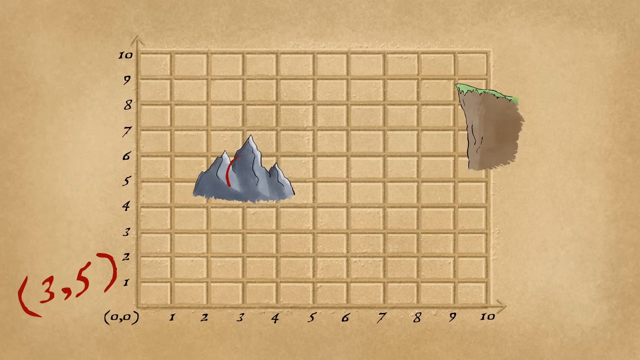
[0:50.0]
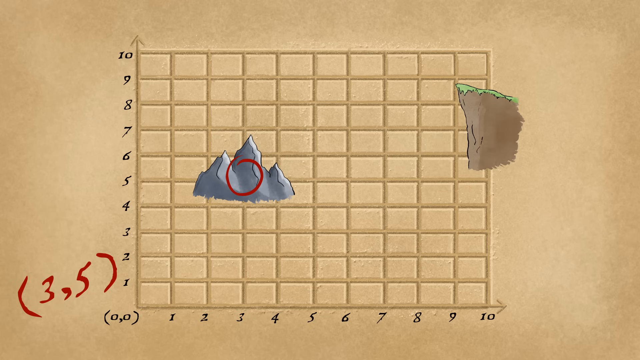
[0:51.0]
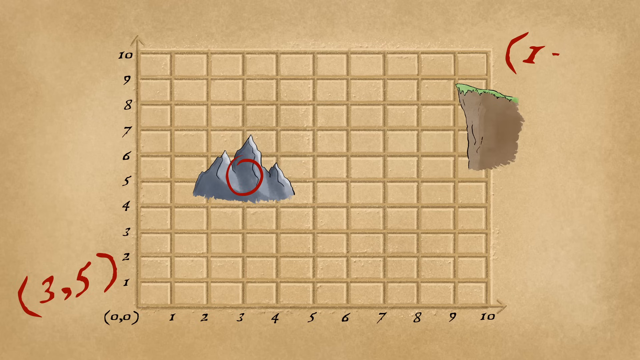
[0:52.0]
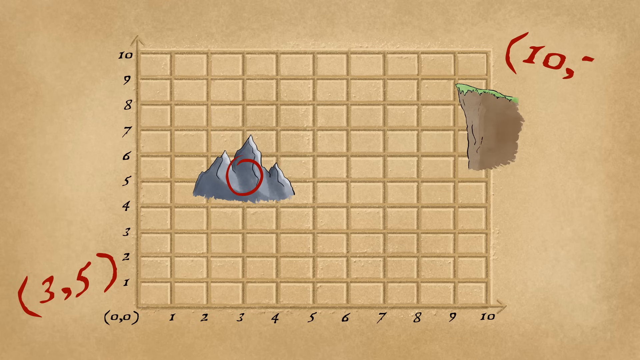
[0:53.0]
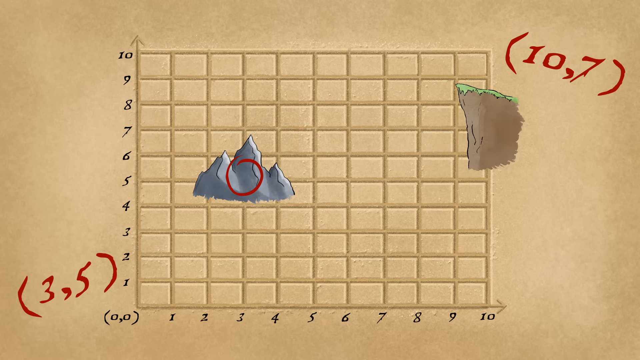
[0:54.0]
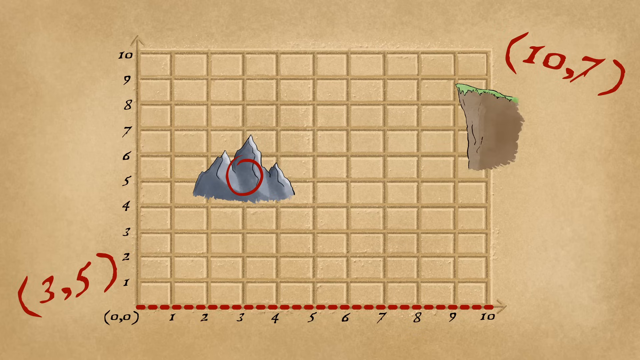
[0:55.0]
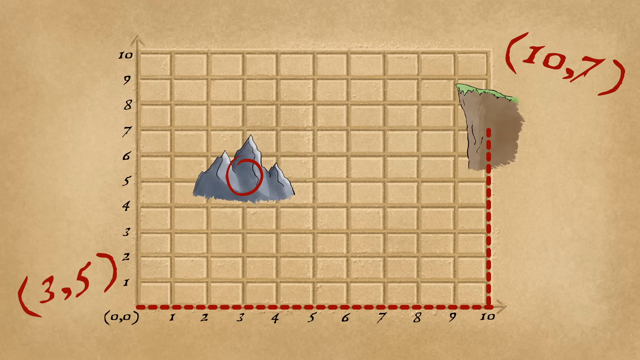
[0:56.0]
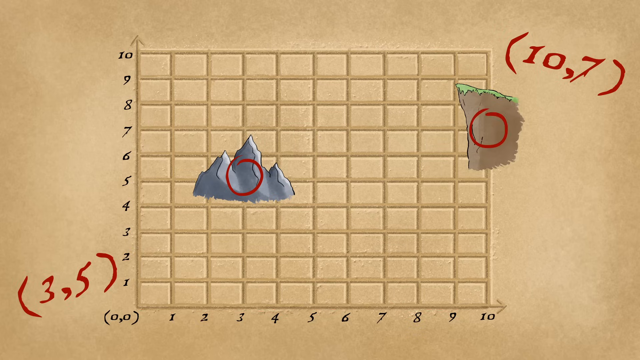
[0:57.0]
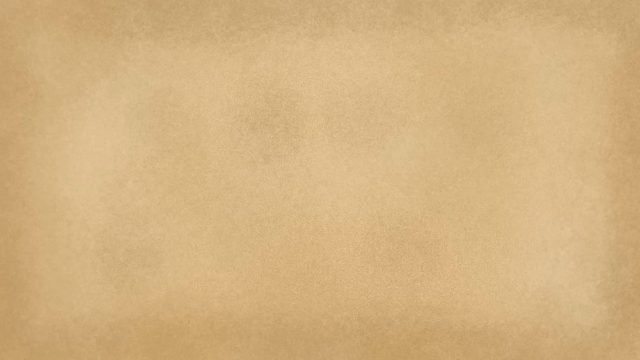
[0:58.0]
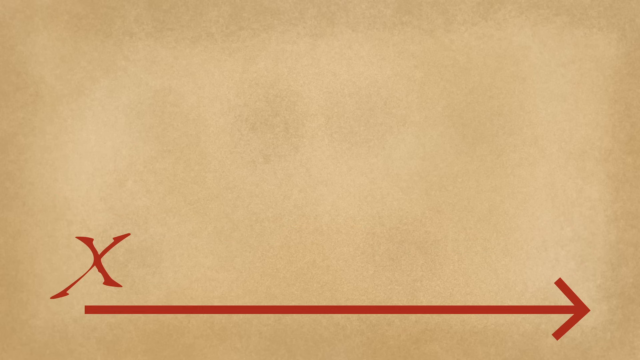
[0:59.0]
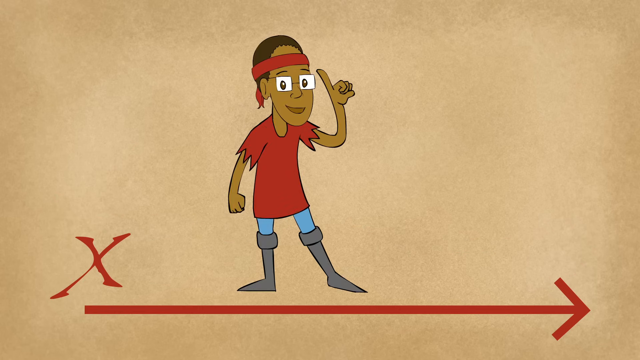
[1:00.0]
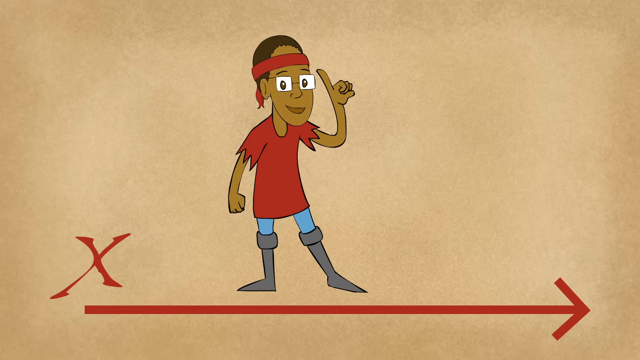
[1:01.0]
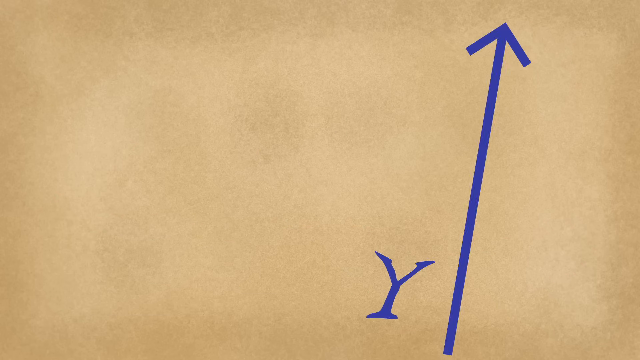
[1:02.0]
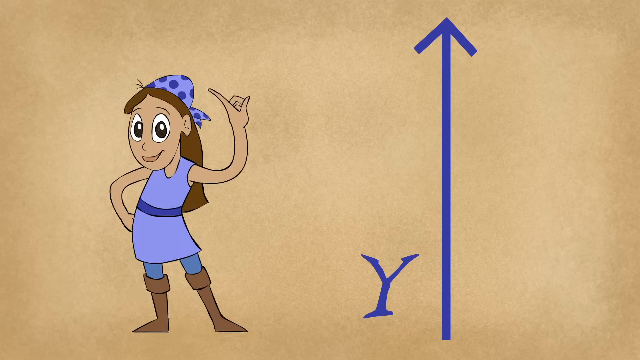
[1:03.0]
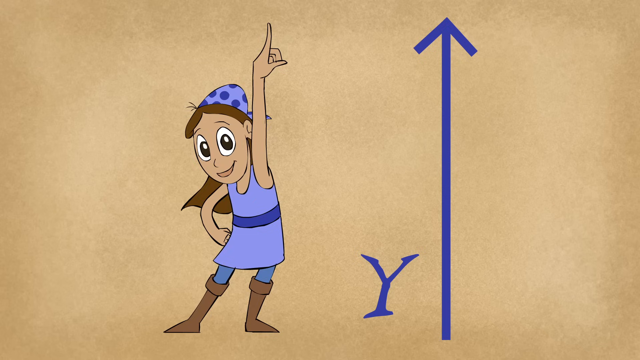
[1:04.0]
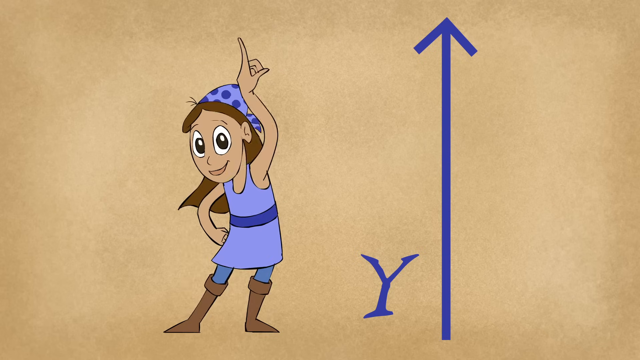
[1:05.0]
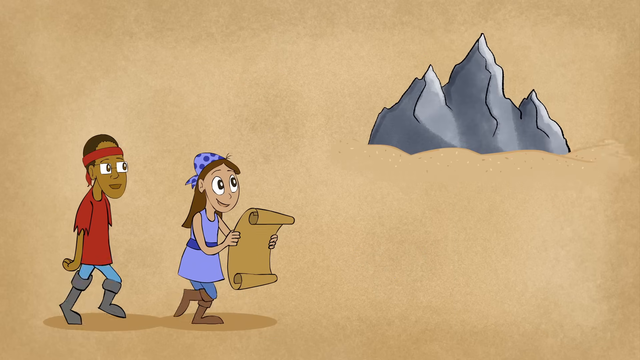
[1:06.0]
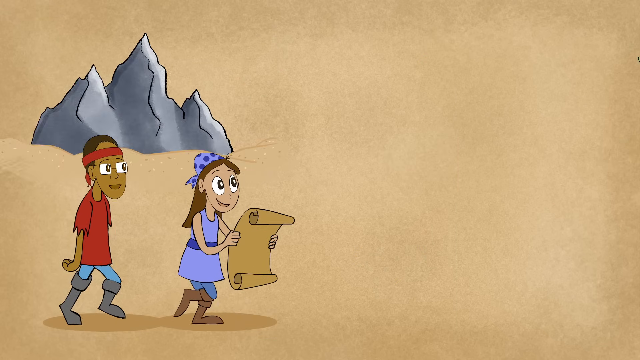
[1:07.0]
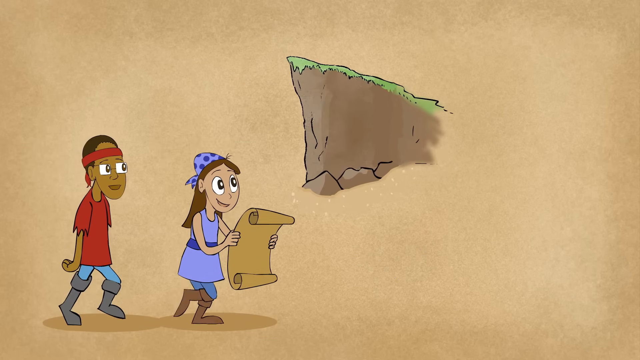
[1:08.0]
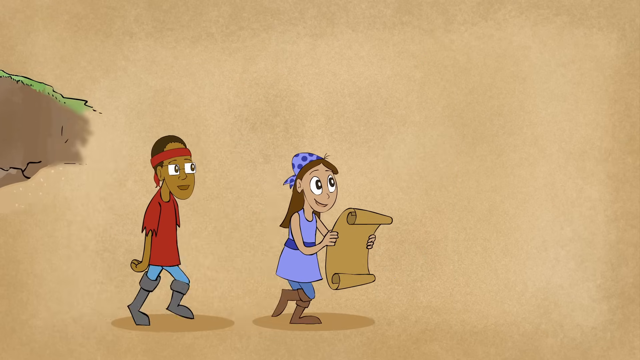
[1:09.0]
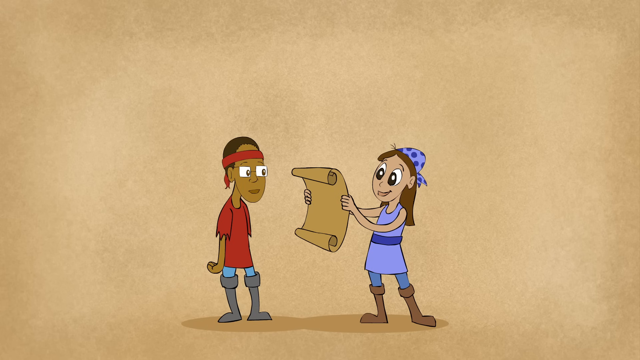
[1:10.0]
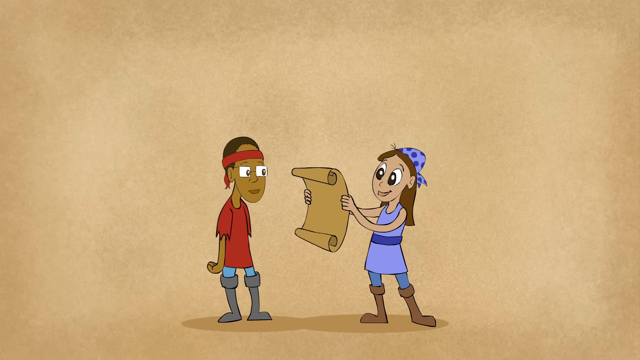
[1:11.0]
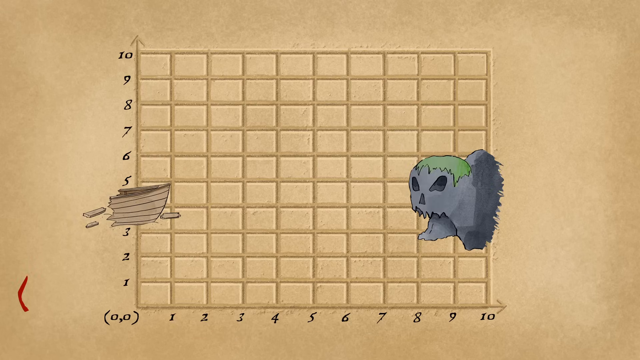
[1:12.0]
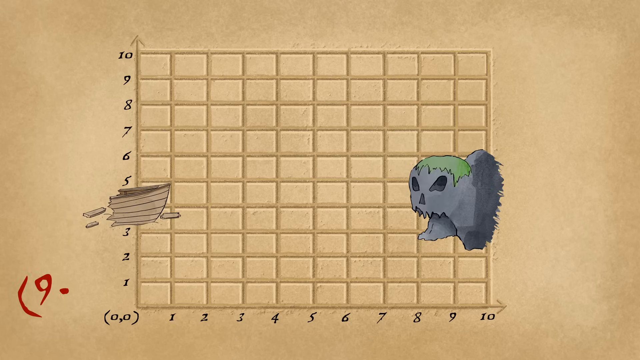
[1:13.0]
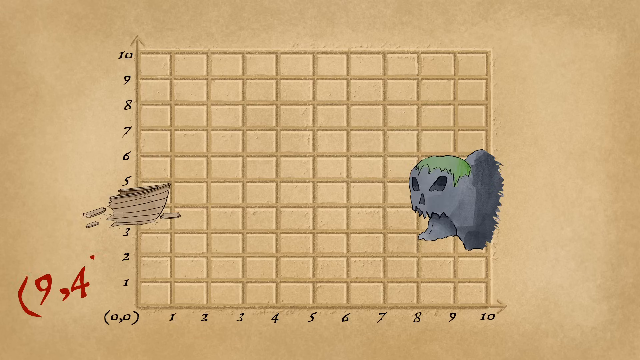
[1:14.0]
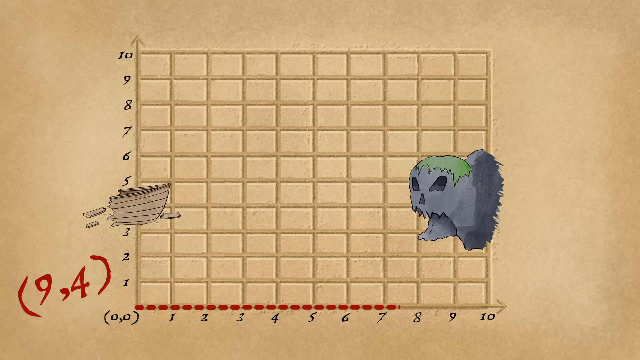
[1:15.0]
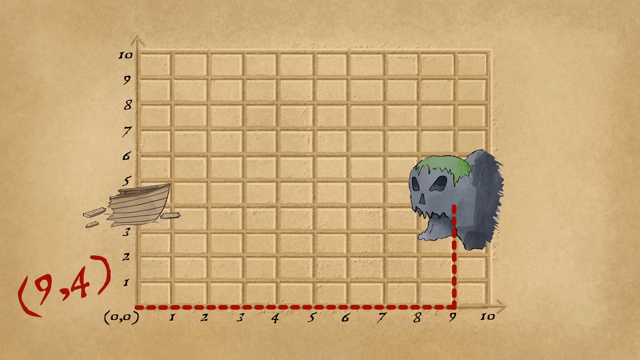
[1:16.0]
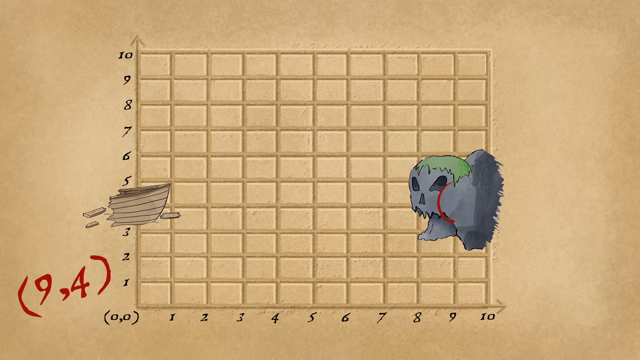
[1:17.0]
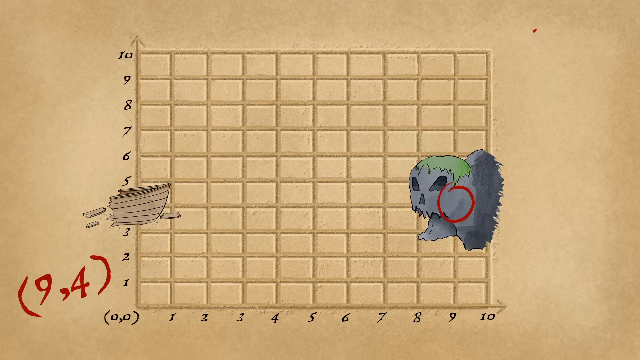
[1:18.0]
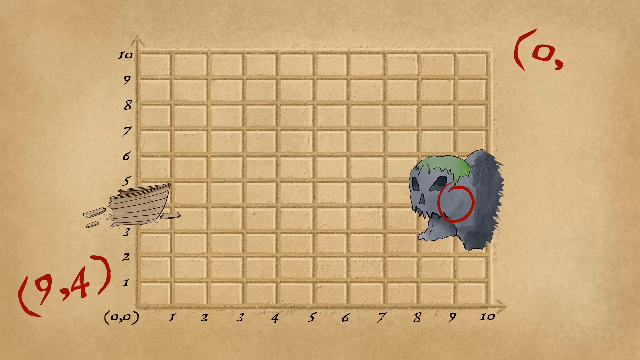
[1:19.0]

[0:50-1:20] The line running left to right is X and the line on the upper side is Y. A girl points toward the way to the goal, indicating the upper side.